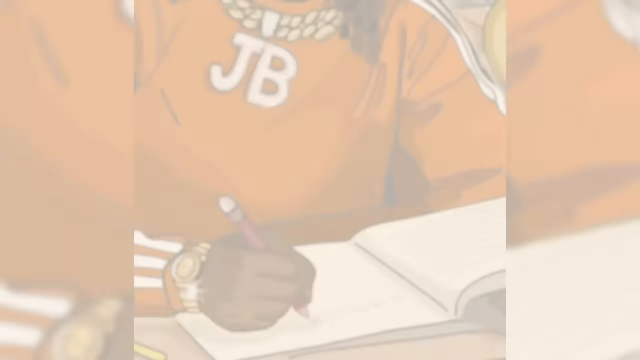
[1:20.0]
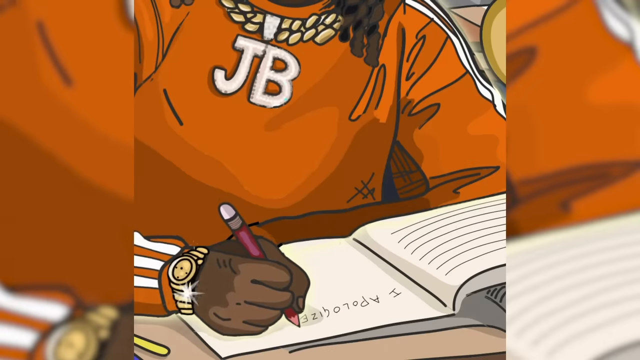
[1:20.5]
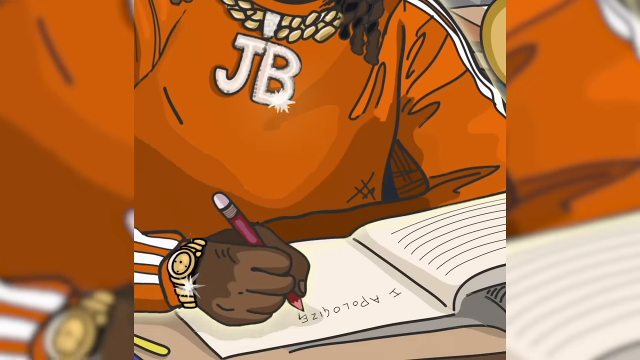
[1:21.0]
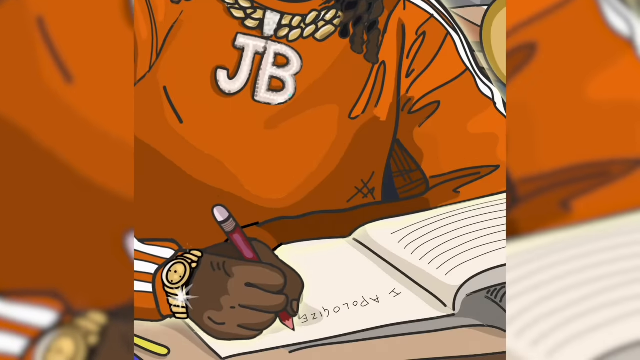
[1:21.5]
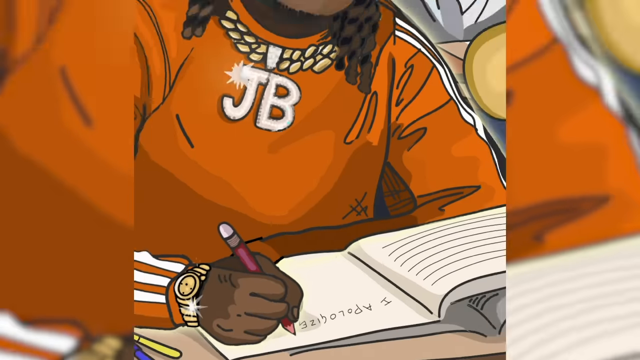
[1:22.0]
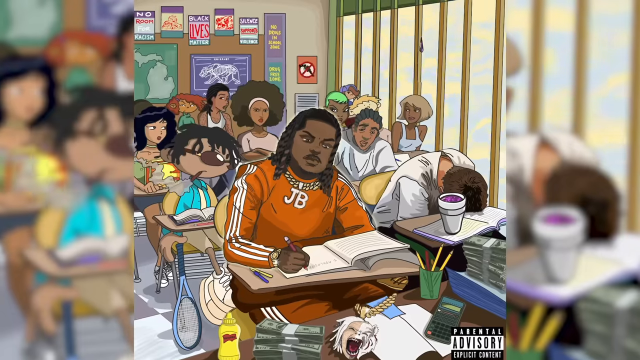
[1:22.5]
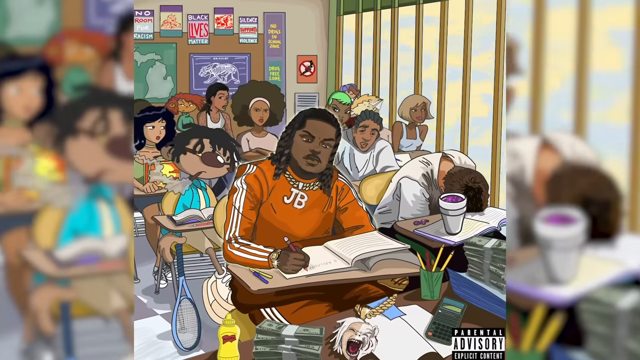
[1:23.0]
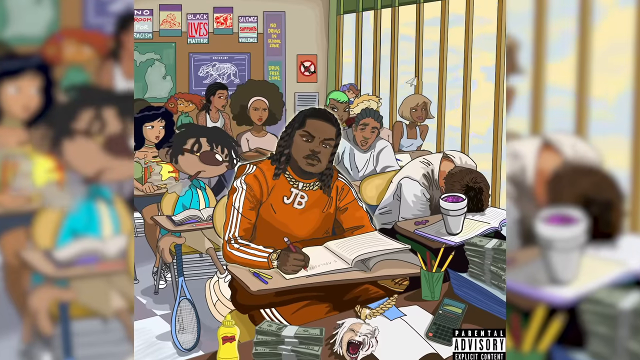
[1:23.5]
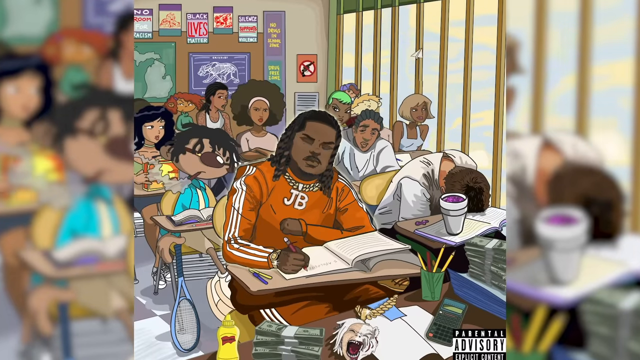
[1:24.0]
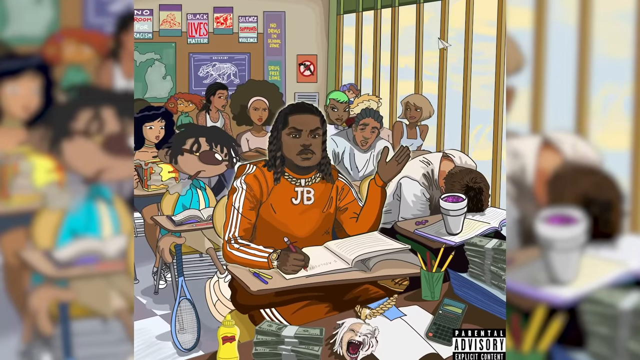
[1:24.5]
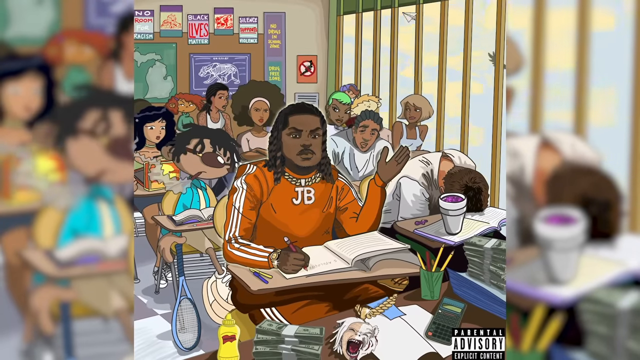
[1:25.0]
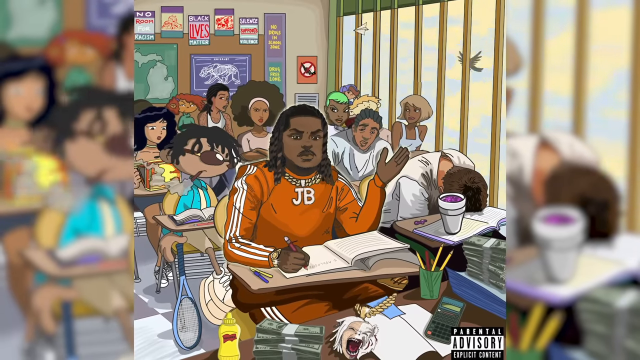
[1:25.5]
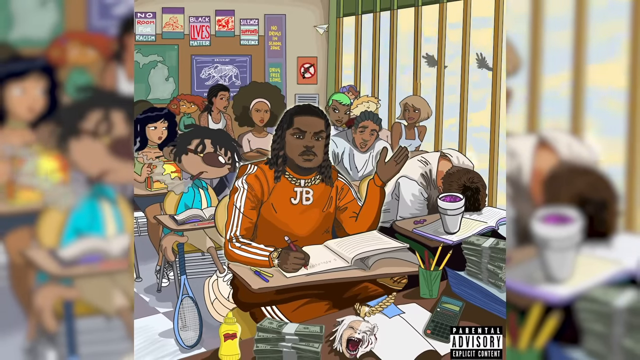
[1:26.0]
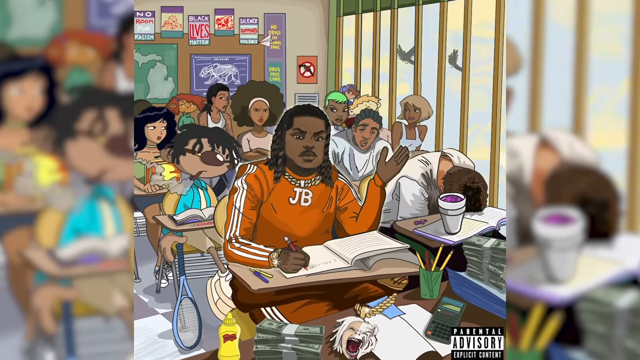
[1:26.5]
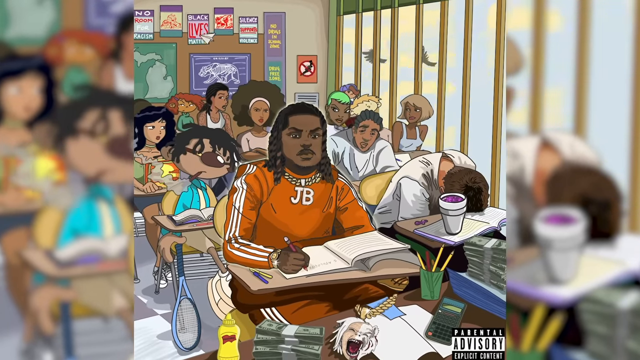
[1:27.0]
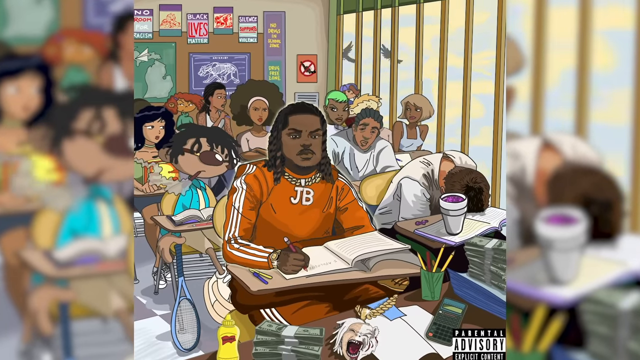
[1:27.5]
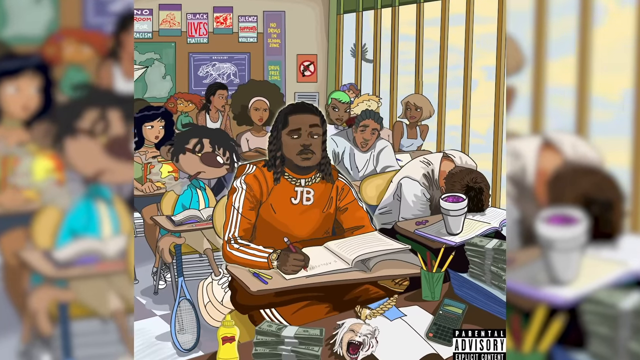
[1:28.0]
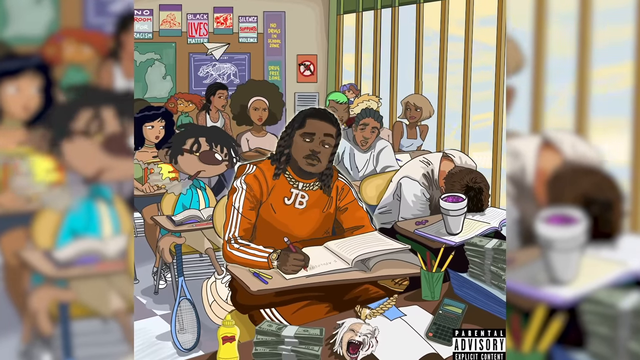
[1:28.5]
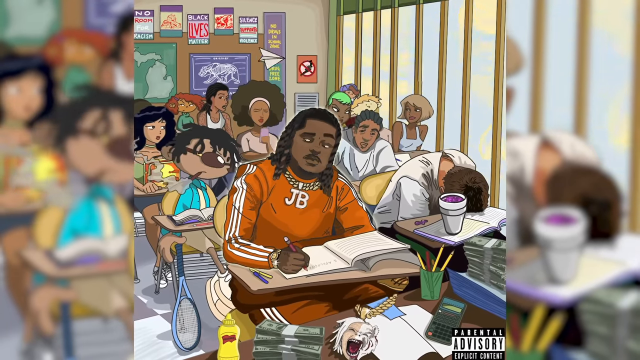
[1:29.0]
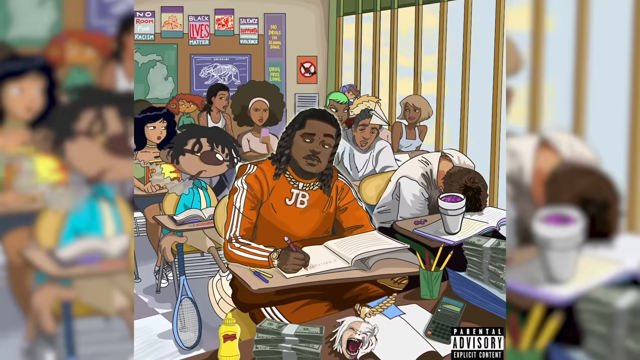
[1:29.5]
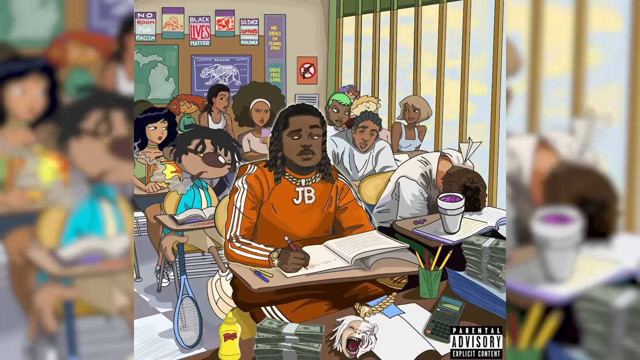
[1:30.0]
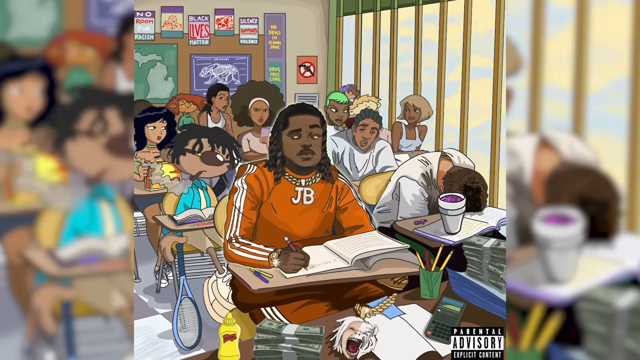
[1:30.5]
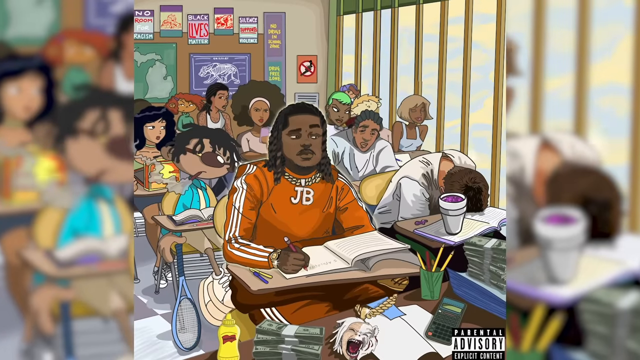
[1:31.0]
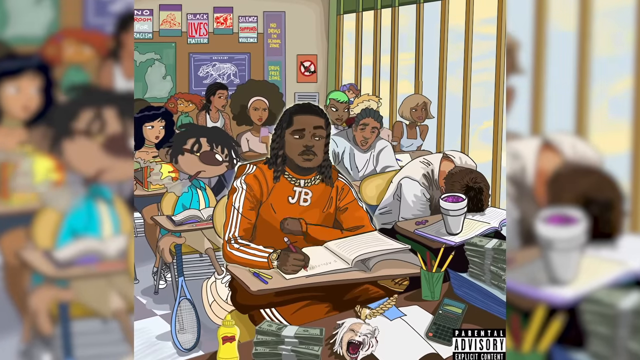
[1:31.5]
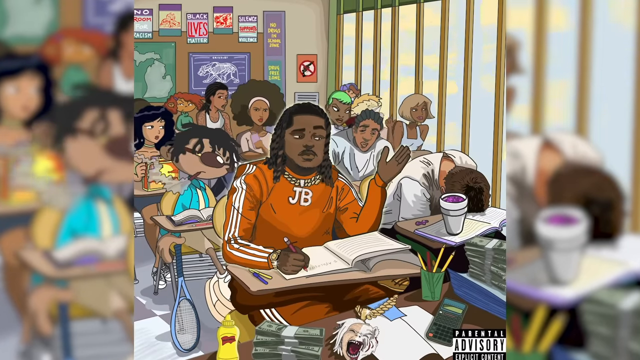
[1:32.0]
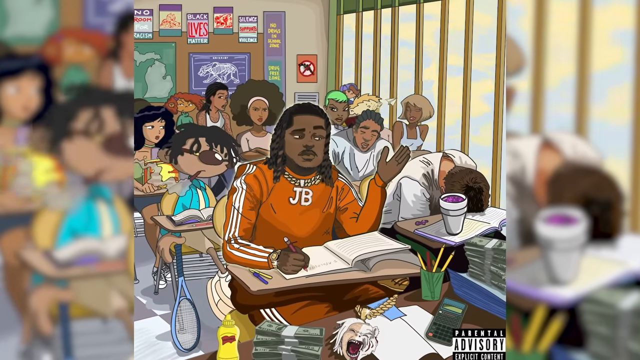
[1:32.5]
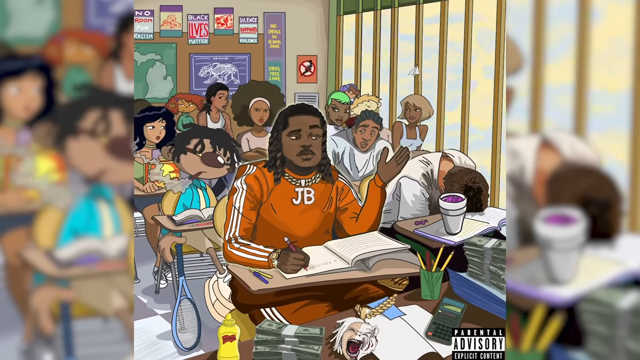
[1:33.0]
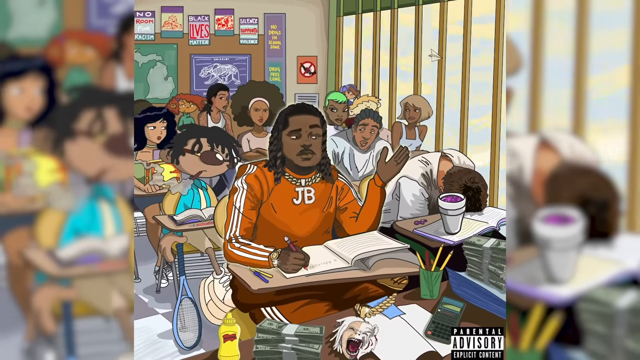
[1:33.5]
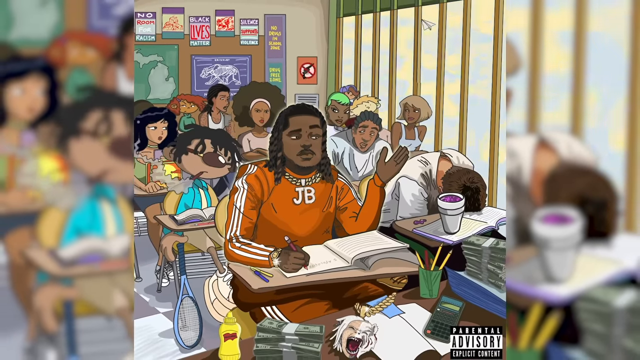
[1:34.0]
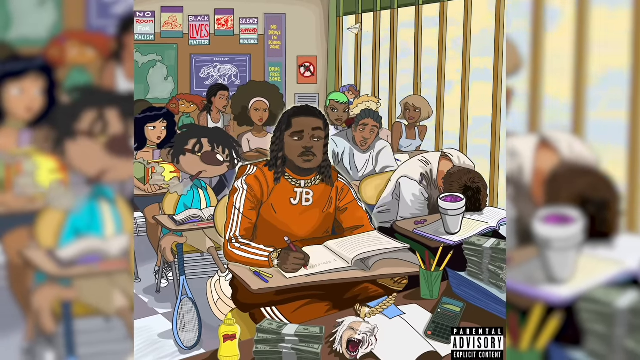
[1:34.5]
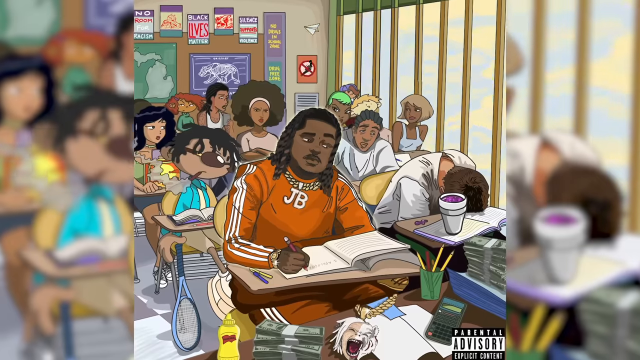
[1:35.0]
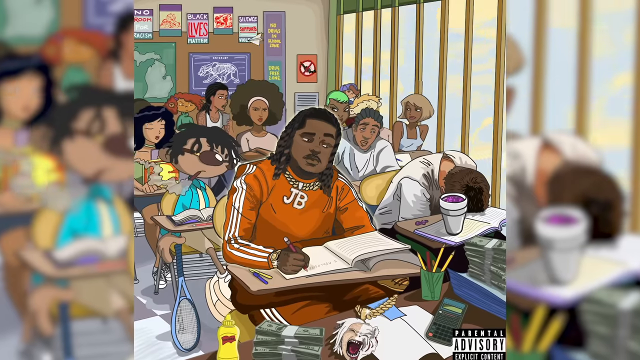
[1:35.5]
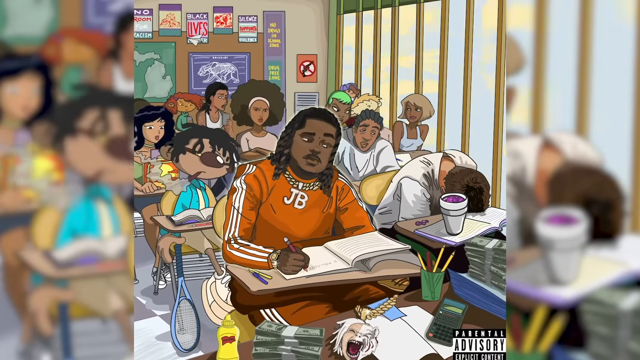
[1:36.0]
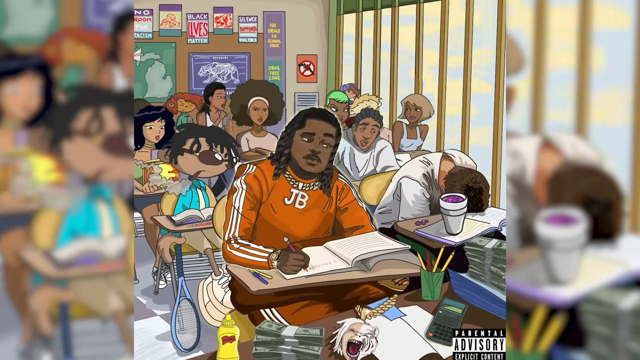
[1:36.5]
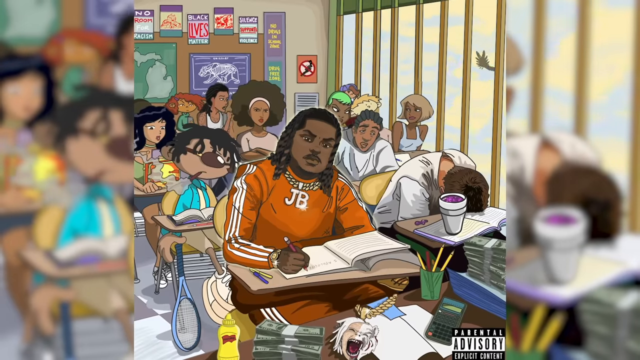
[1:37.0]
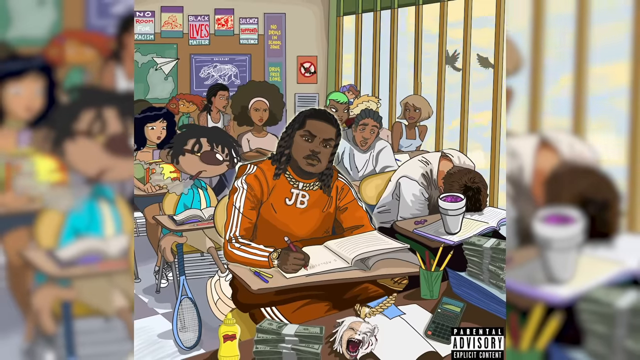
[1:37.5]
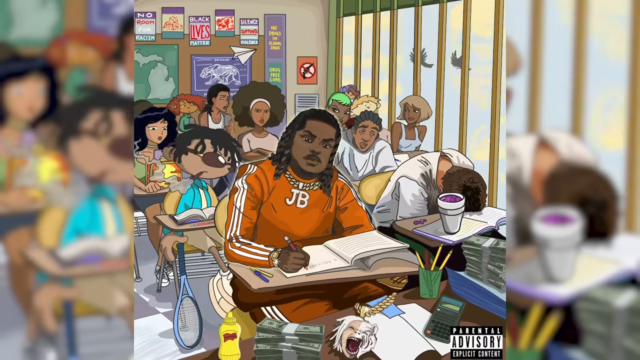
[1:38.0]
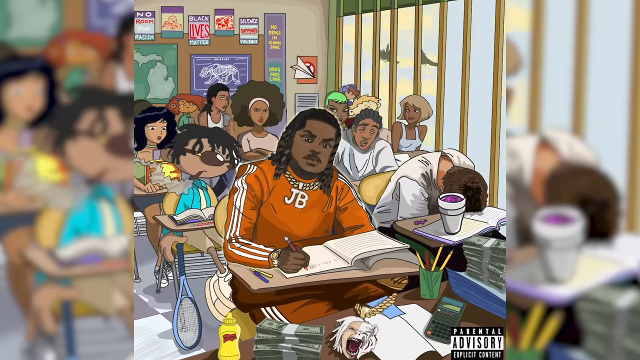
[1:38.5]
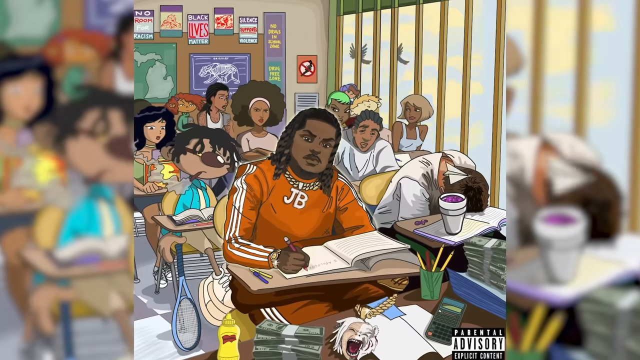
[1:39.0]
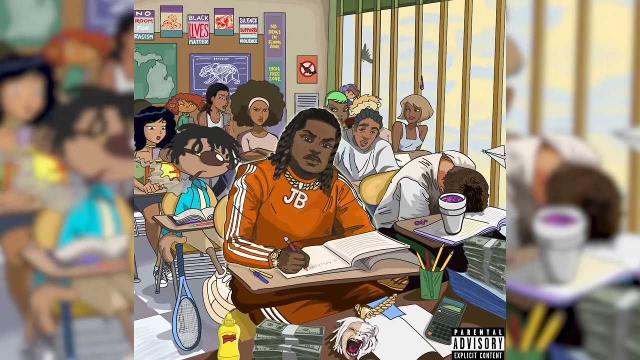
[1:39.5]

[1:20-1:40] JB is still writing "I apologize". He puts his hand up and brings it back down to his lap, then raises it again a second later and lowers it back to his lap. He keeps looking around the room with a slight frown; his expression is otherwise very plain. The kid behind him is still bobbing and nodding his head, possibly smoking a joint. The other students look zoned out, nodding around like zombies. The young lady with the short blonde bob turns her head to look out the window for a few seconds, then turns right back around to look at everybody else. She wears a small blue tank top.